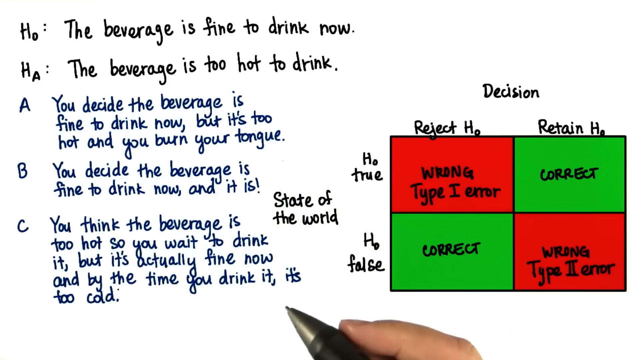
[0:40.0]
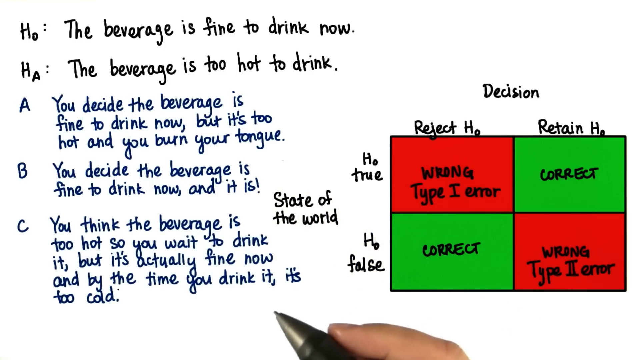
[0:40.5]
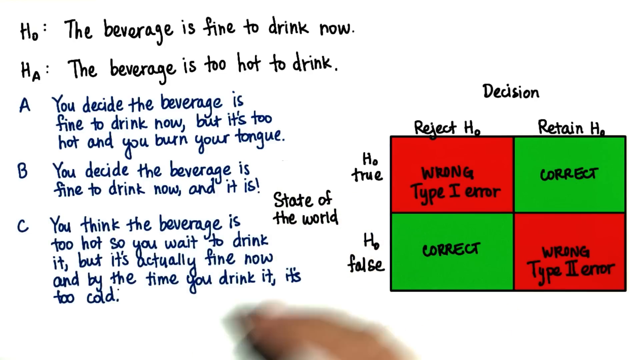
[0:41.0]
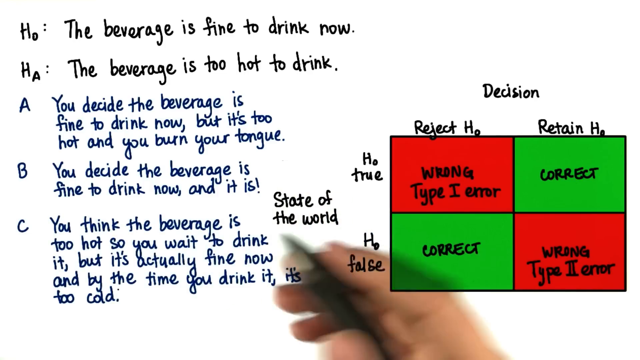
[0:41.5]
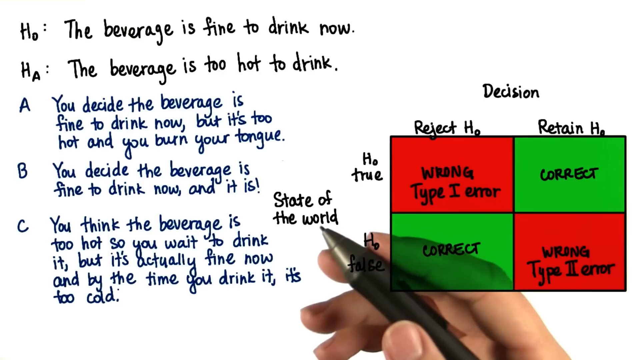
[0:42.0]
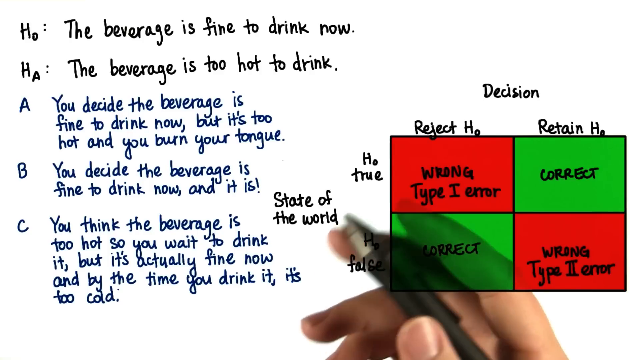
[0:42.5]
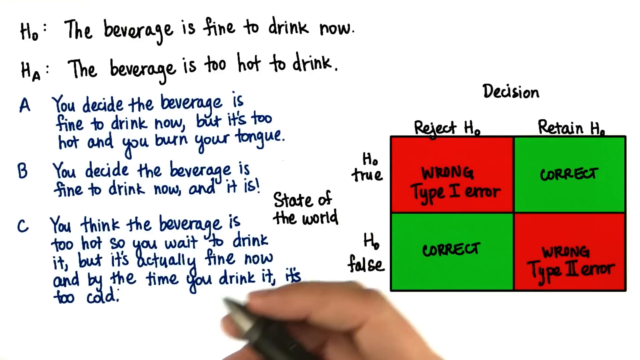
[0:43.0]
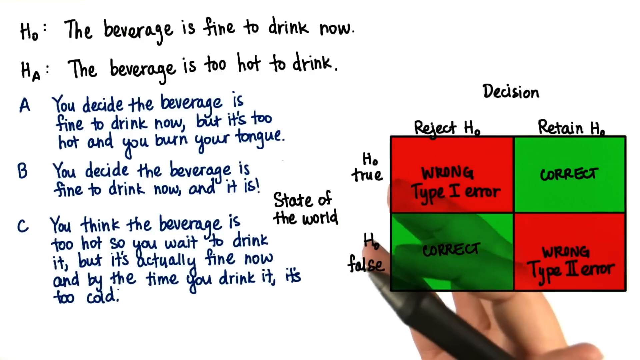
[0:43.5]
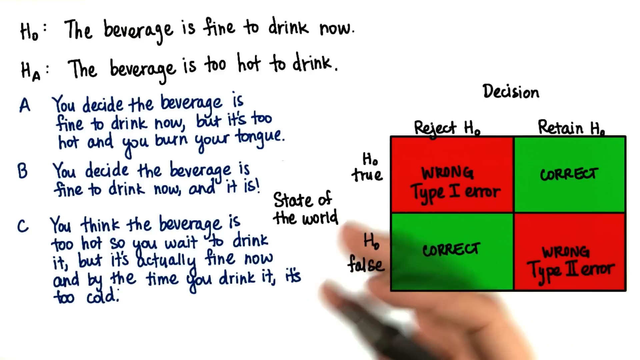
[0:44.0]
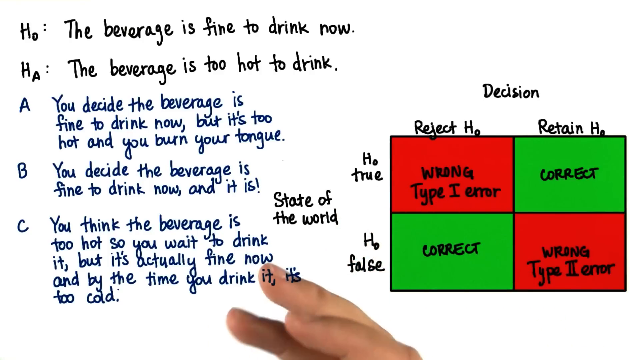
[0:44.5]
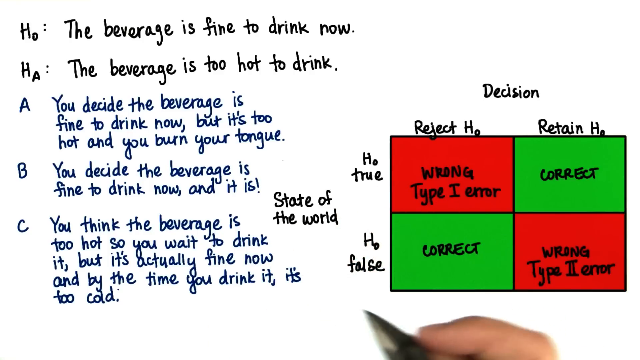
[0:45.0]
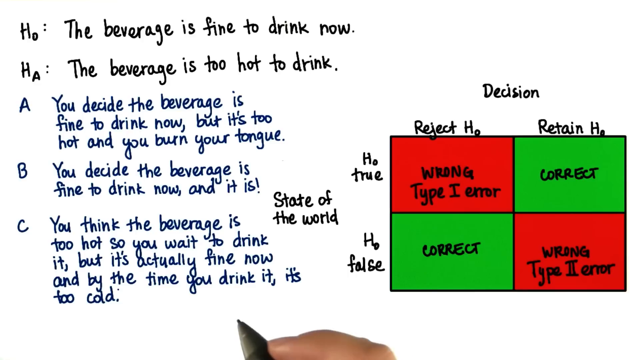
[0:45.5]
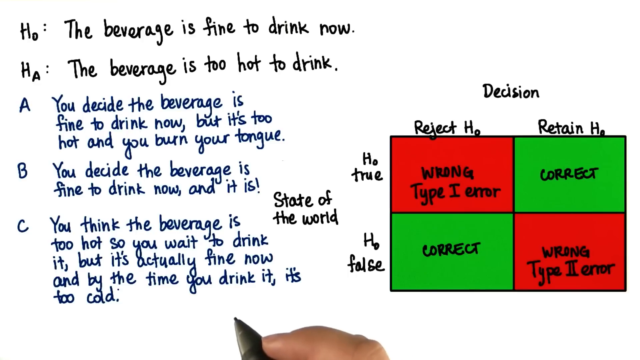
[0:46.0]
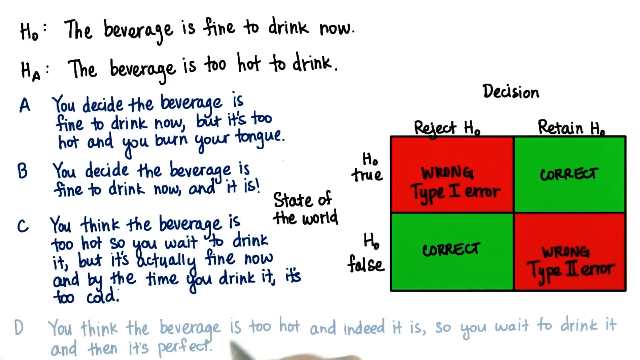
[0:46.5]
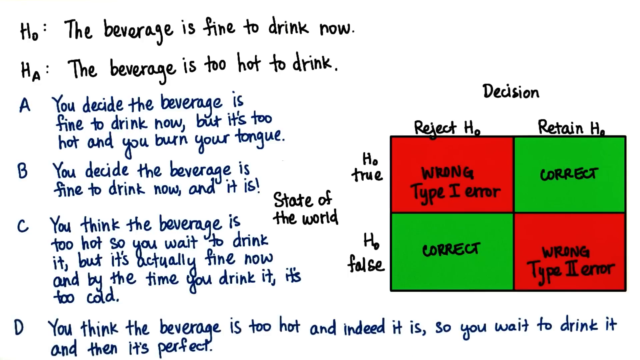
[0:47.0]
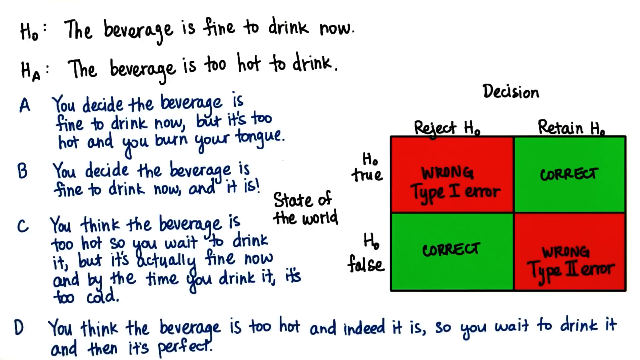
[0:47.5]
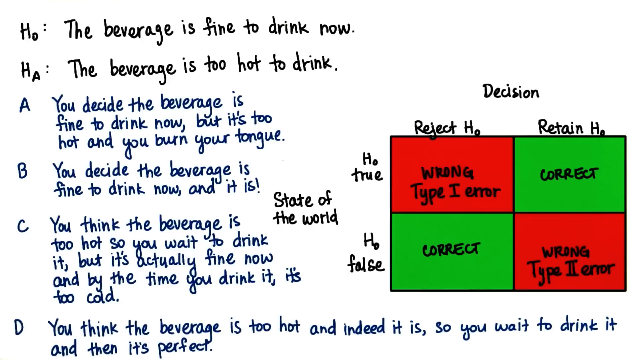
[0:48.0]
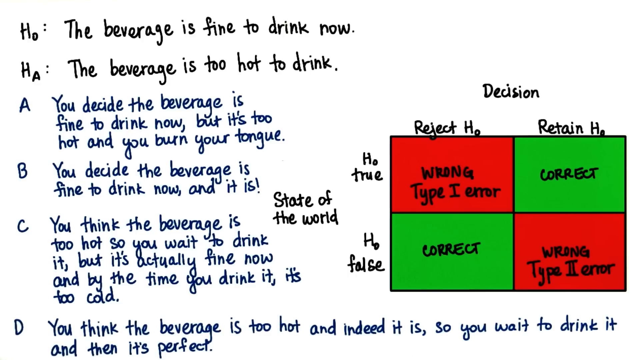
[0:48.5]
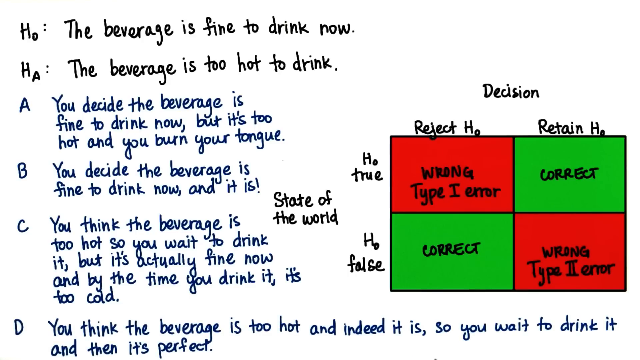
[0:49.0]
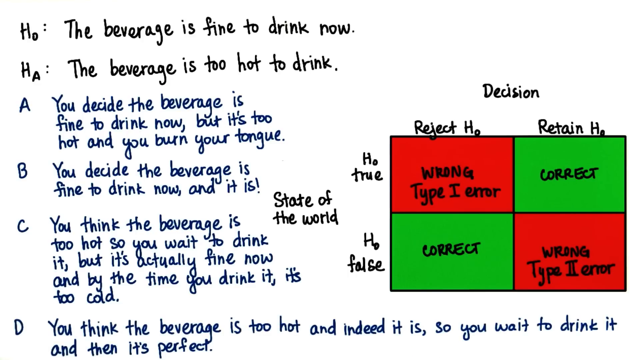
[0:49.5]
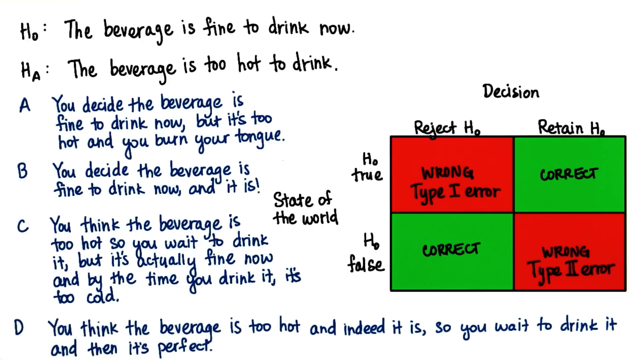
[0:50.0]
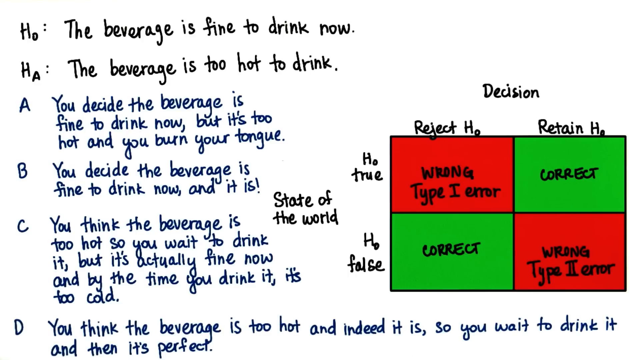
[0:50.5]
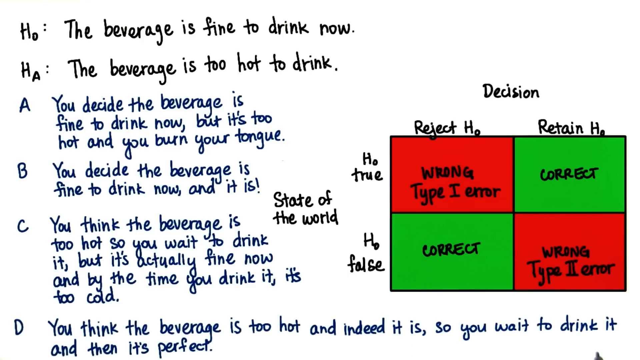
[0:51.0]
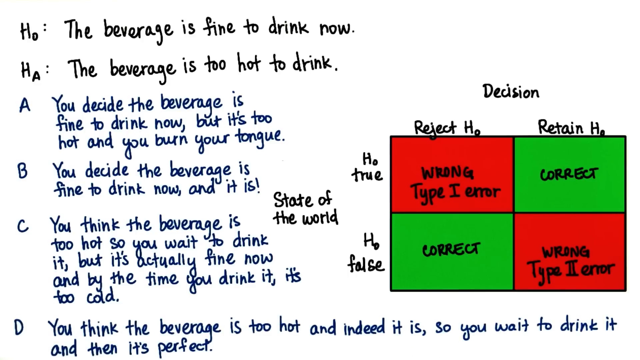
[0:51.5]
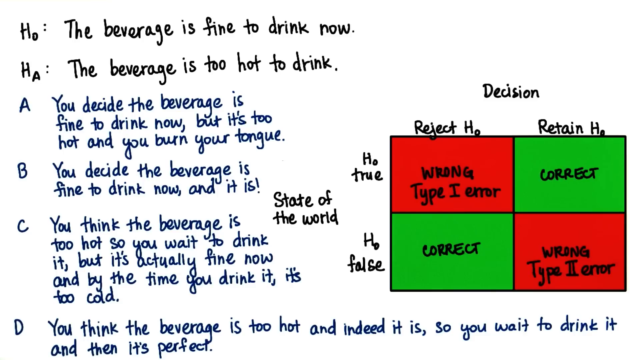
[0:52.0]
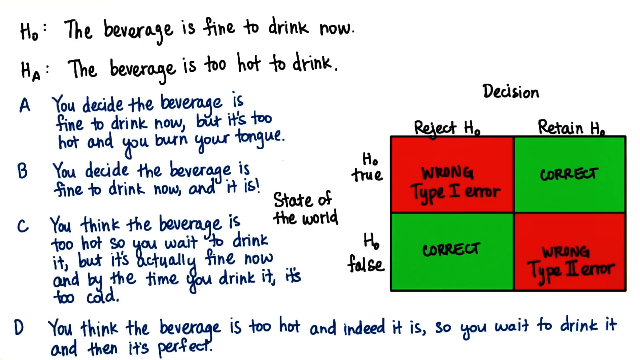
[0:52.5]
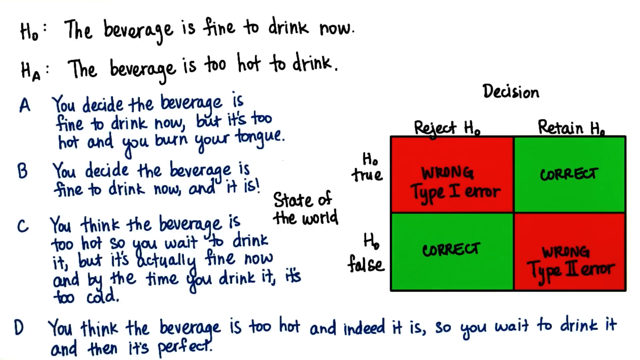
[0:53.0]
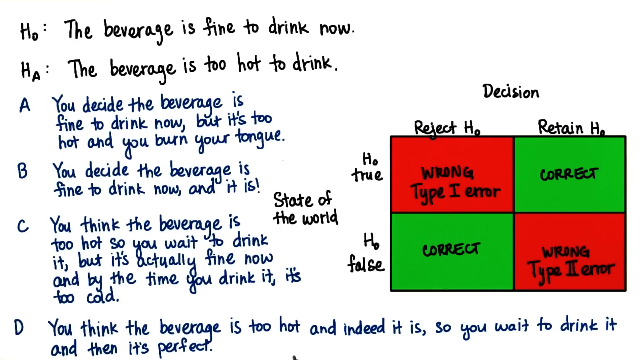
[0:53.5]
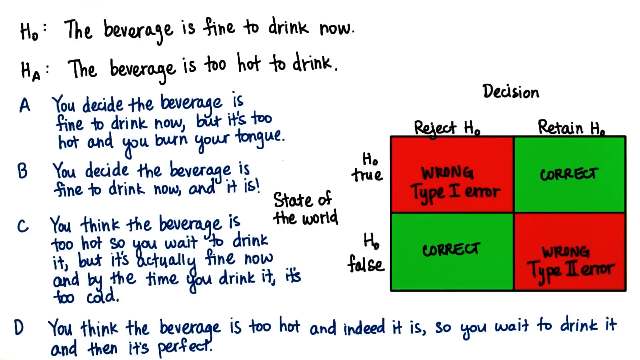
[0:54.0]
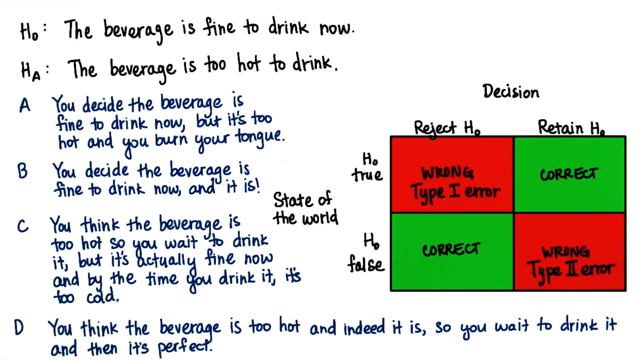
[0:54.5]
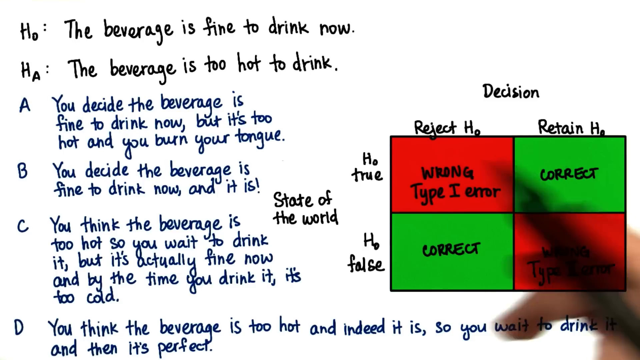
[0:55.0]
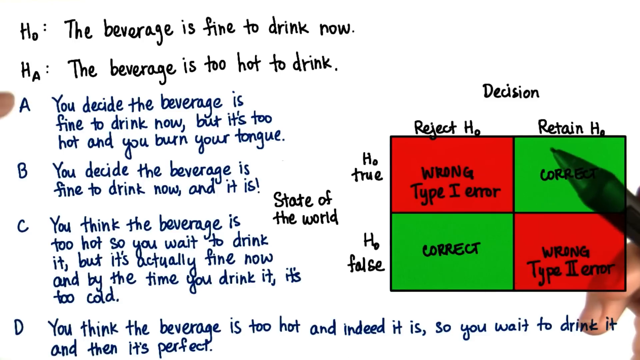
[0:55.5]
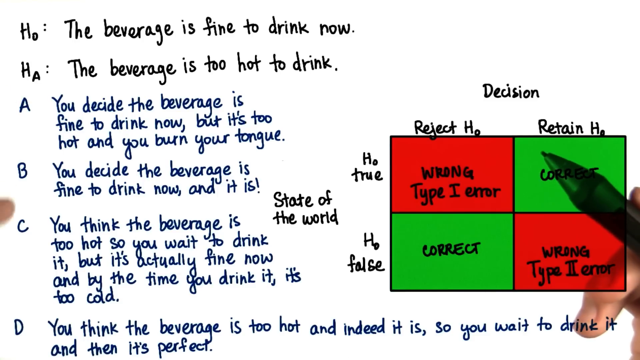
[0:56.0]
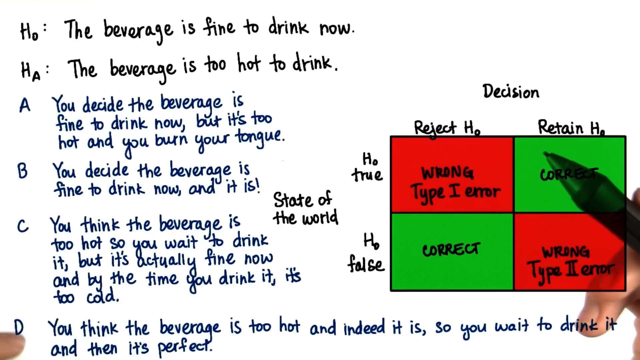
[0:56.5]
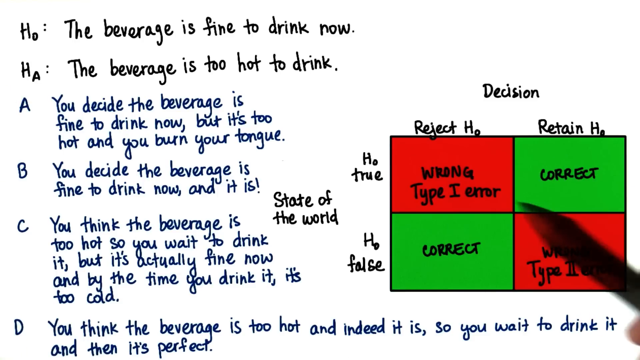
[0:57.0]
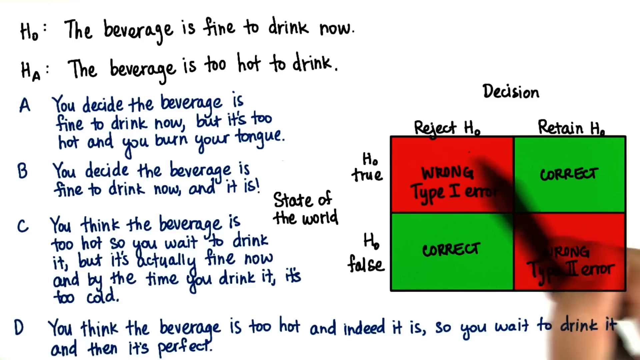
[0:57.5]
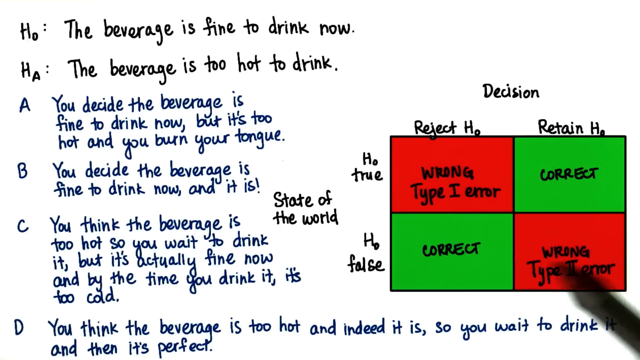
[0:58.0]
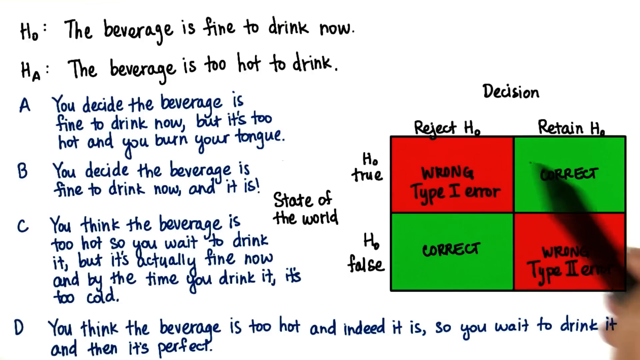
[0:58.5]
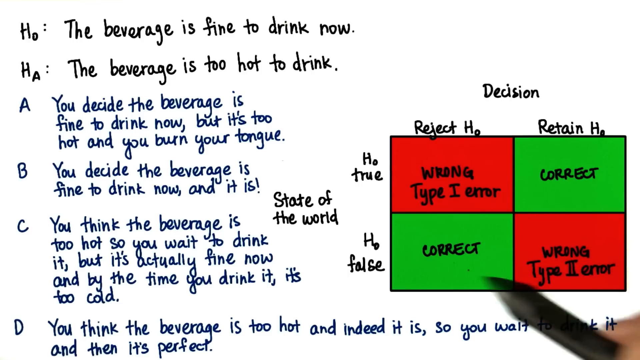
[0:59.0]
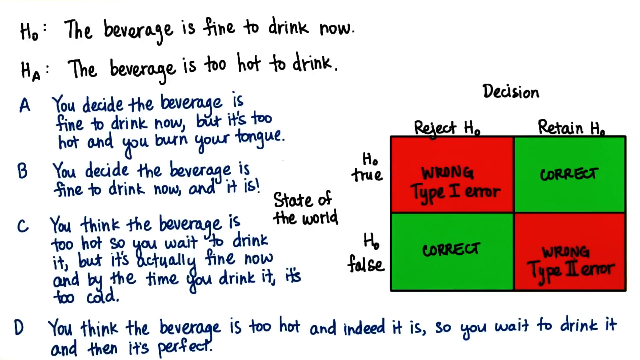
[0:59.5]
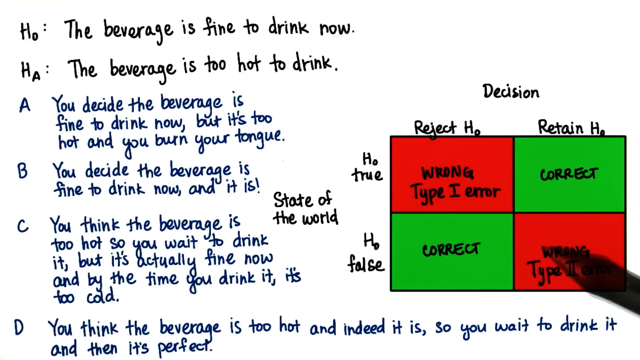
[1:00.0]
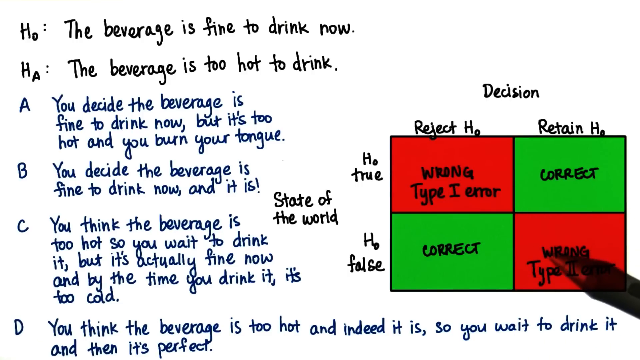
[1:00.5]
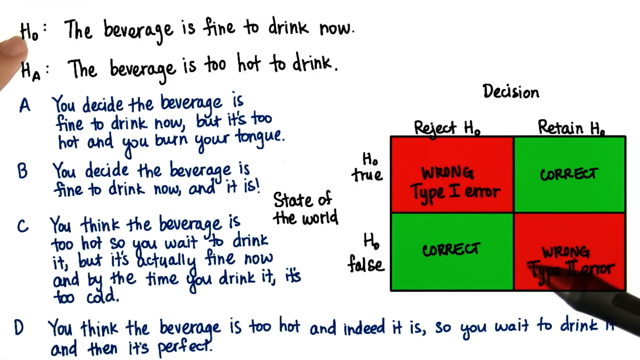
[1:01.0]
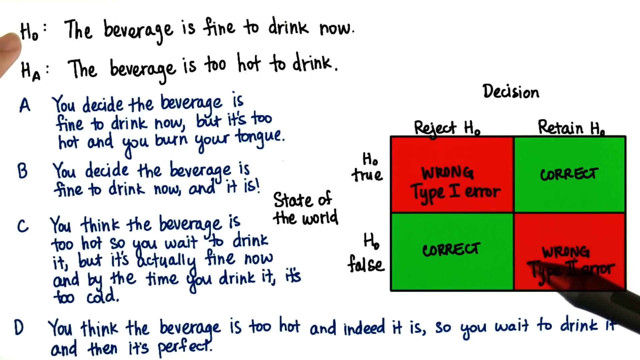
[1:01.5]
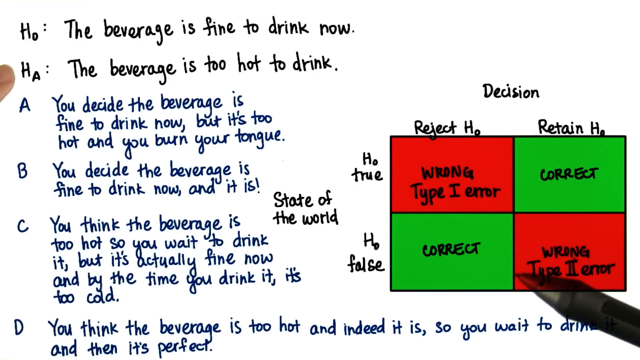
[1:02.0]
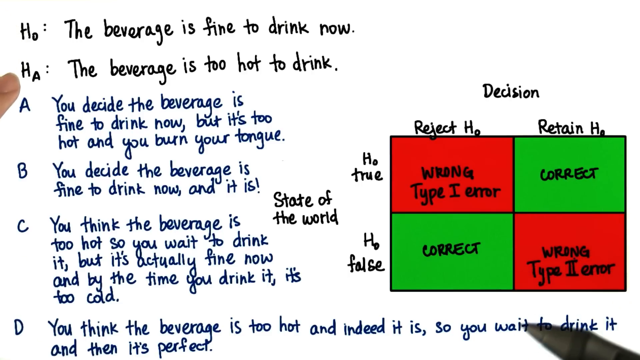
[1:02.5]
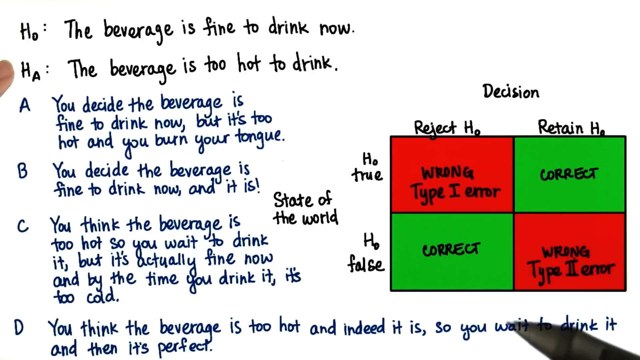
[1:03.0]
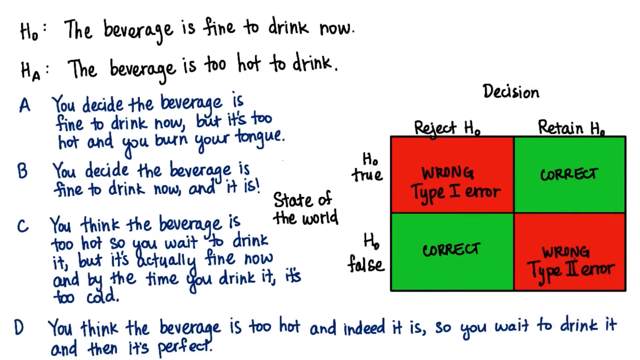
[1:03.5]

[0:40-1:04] The hand wobbles around in the bottom right-hand corner of the screen, with three fingers and the thumb holding the pen. "D" is written under "C", but the full sentence cannot be read because it is low down in the bottom half of the screen, running from the left side to the right. The words that can be made out say "You think the beverage is too hot and indeed it is. You wait to drink it". The hand then comes back from the bottom right-hand corner and moves upwards toward the rectangular shape with the red and green squares inside, and the pen hovers over the word "correct".